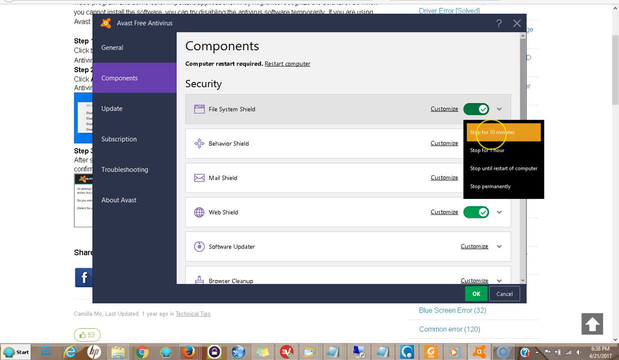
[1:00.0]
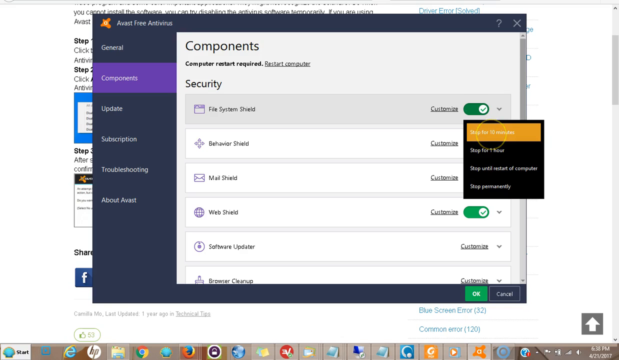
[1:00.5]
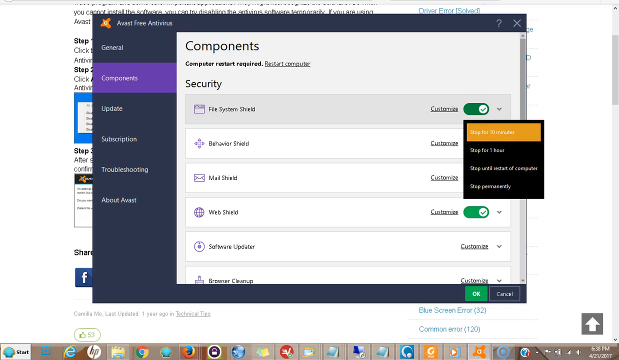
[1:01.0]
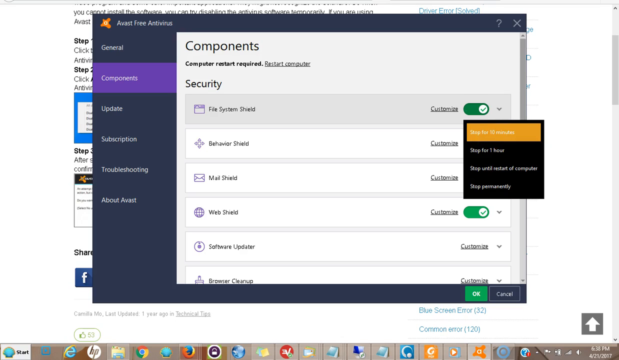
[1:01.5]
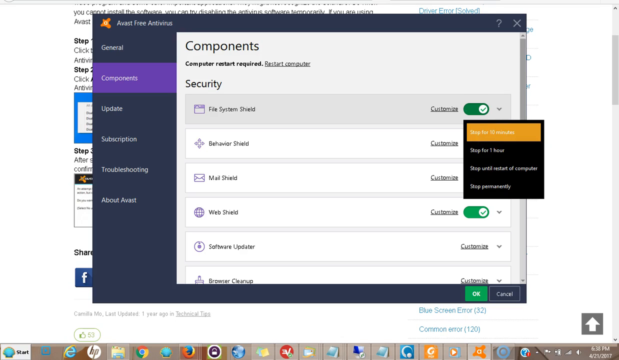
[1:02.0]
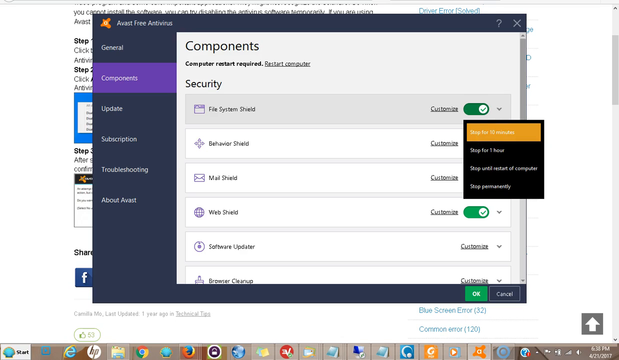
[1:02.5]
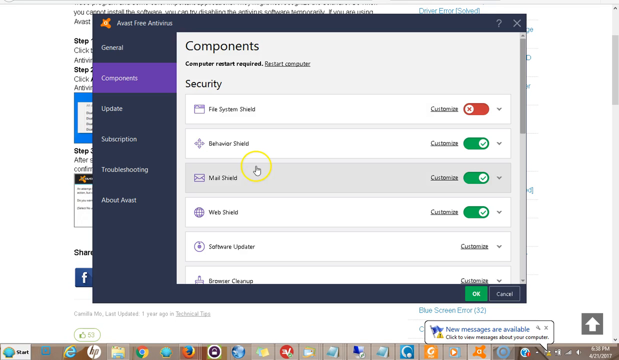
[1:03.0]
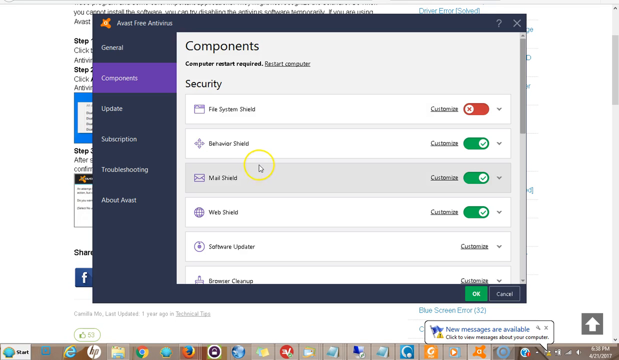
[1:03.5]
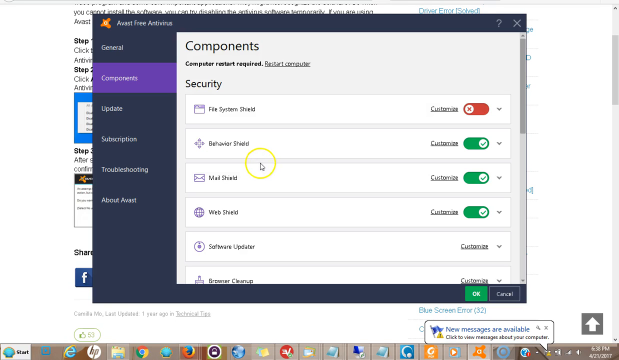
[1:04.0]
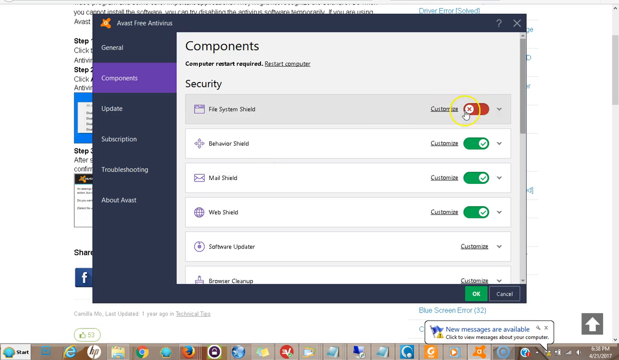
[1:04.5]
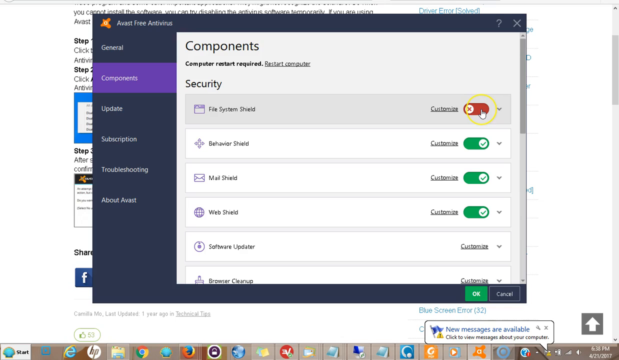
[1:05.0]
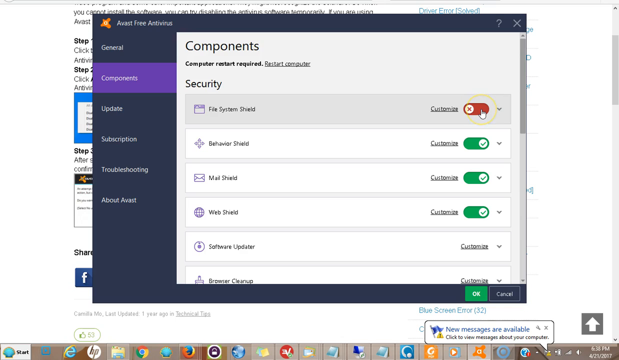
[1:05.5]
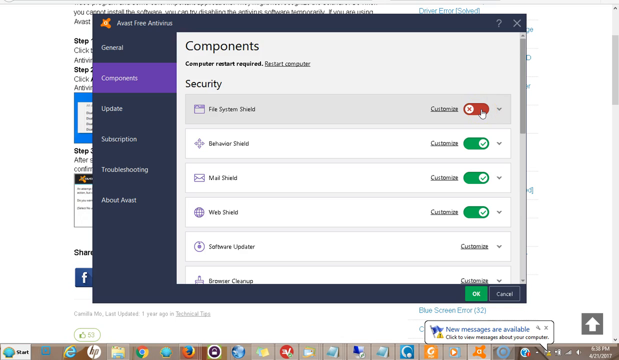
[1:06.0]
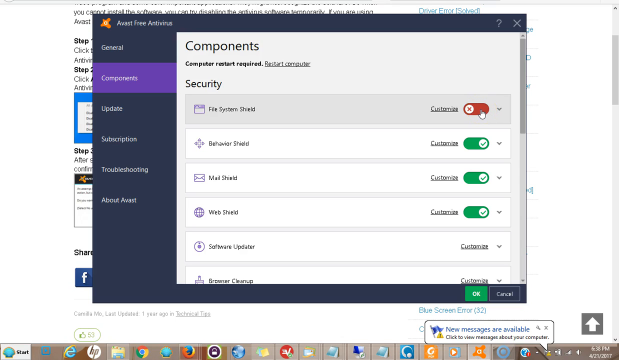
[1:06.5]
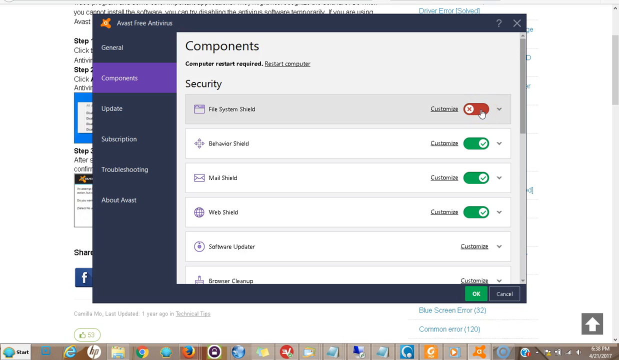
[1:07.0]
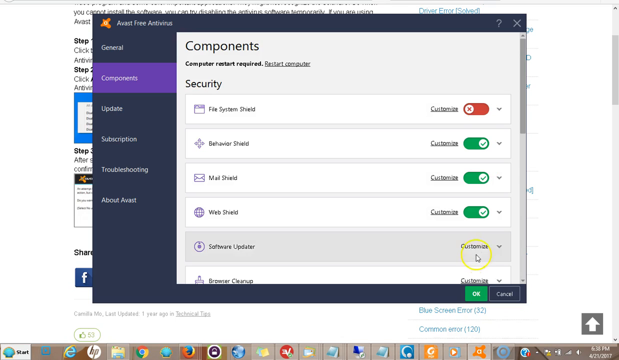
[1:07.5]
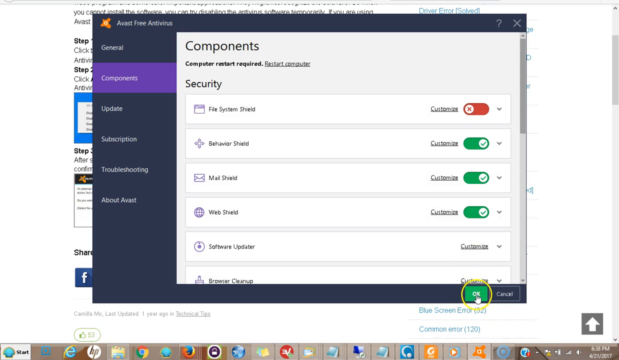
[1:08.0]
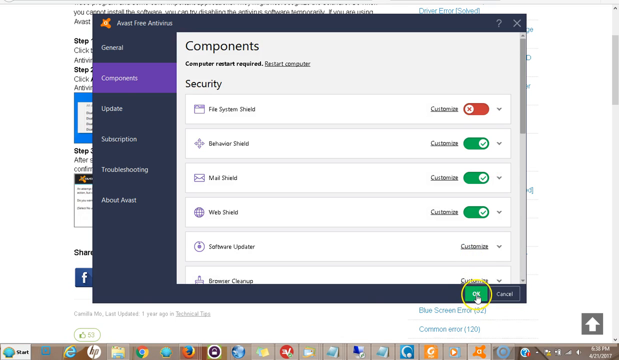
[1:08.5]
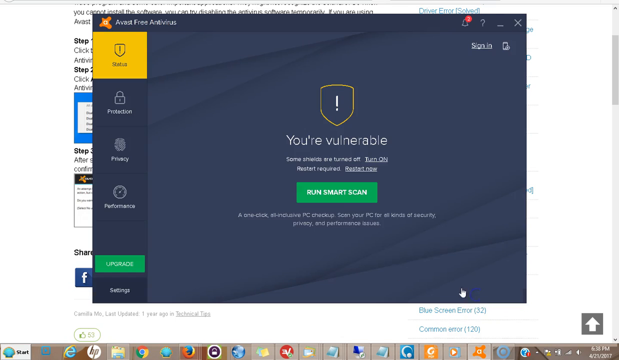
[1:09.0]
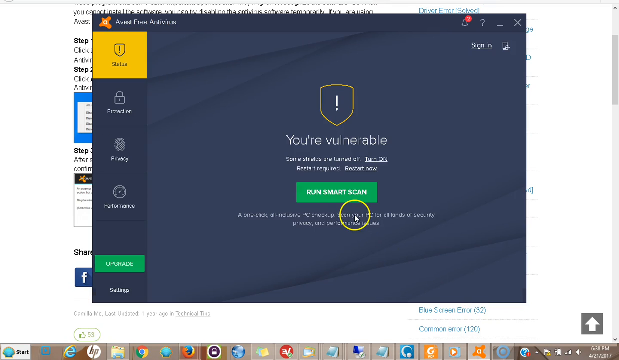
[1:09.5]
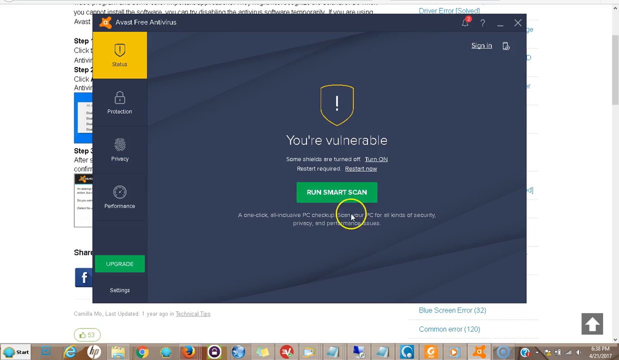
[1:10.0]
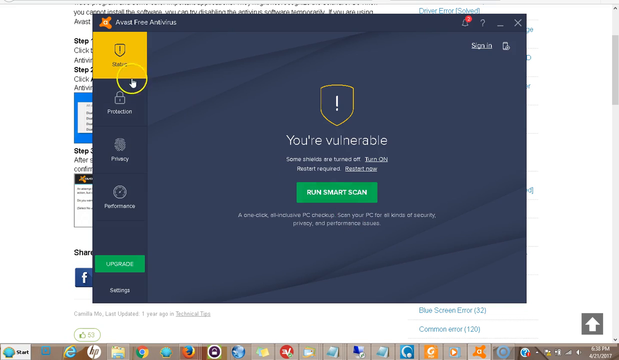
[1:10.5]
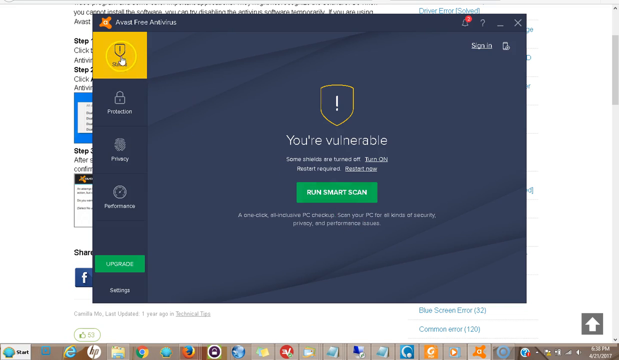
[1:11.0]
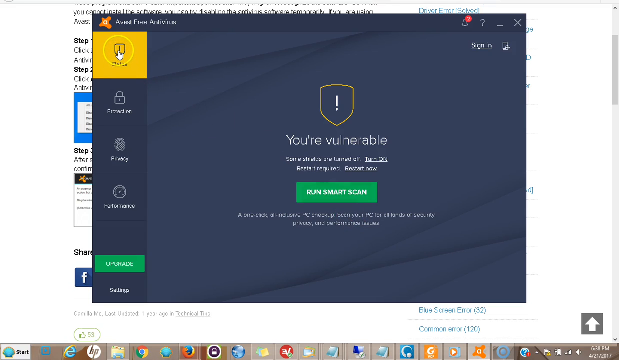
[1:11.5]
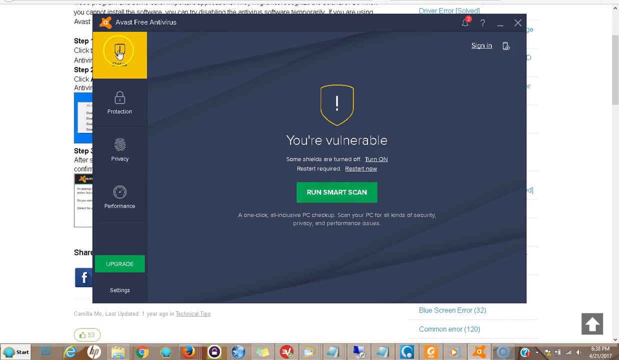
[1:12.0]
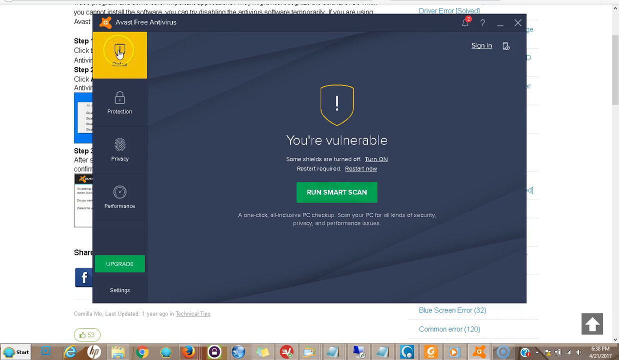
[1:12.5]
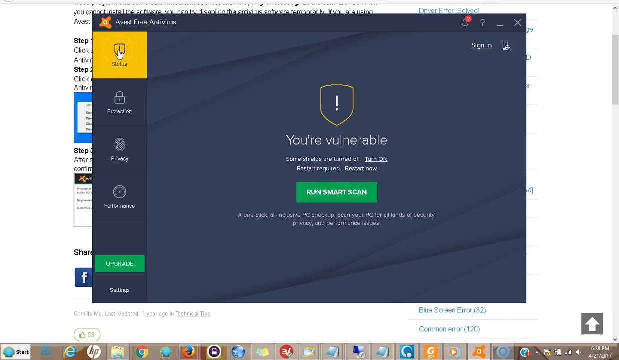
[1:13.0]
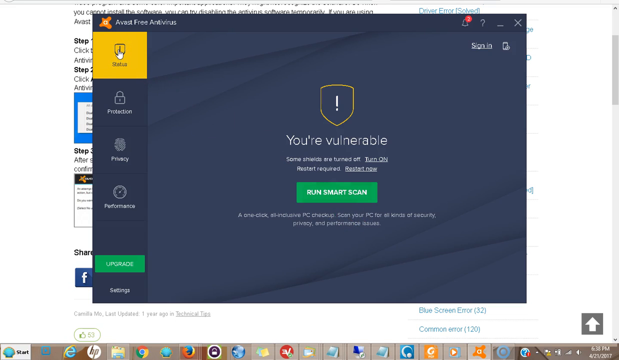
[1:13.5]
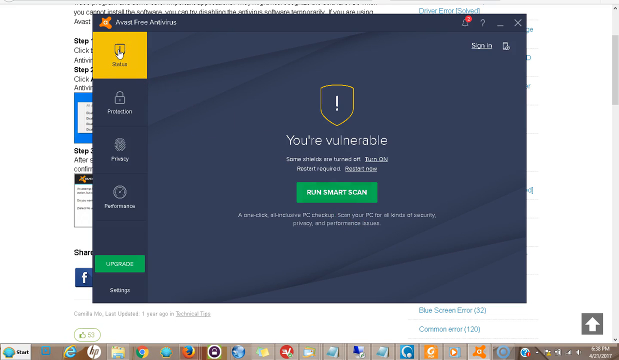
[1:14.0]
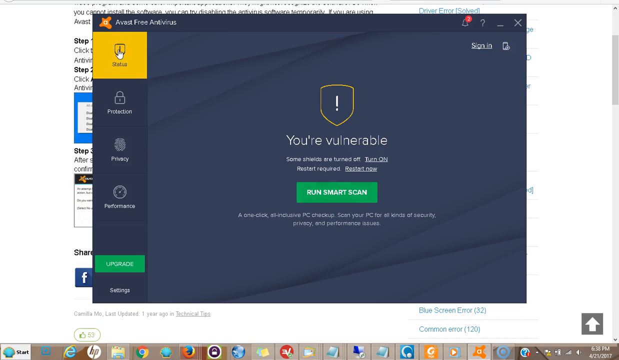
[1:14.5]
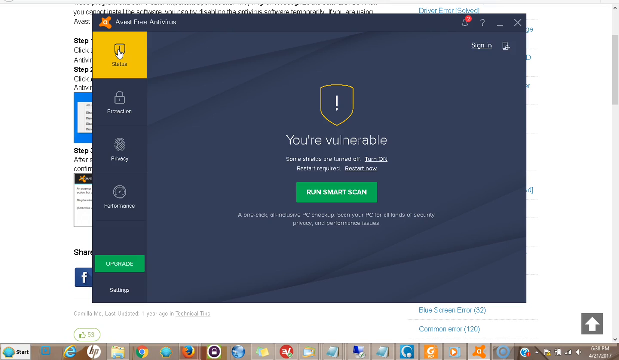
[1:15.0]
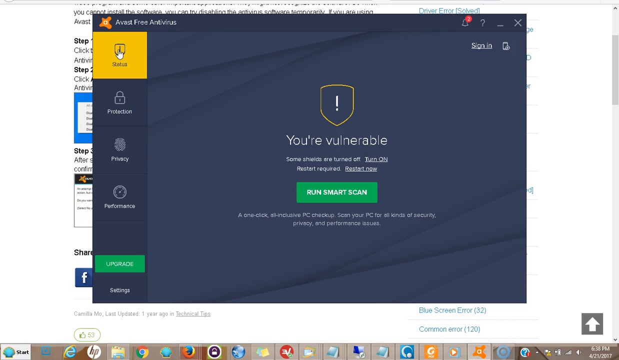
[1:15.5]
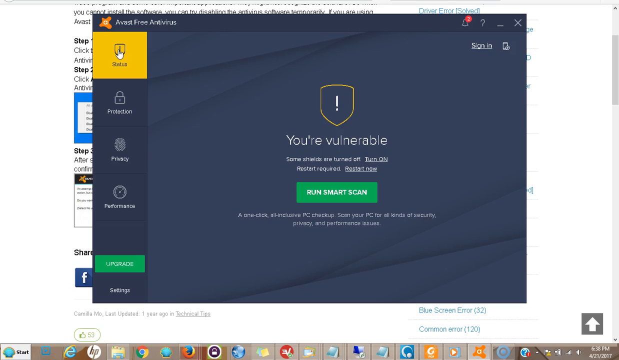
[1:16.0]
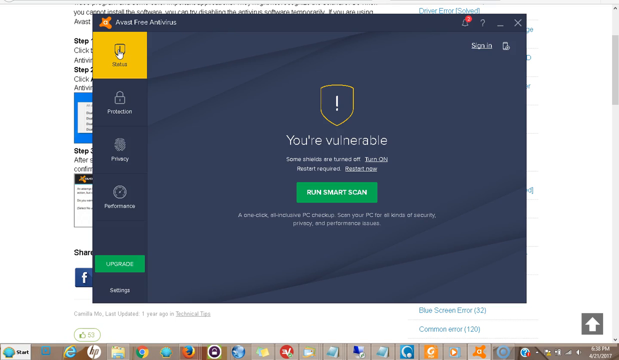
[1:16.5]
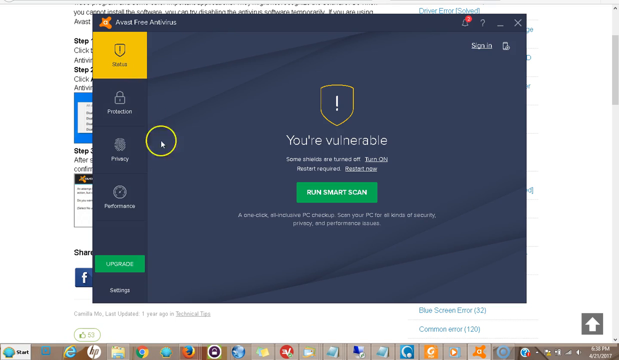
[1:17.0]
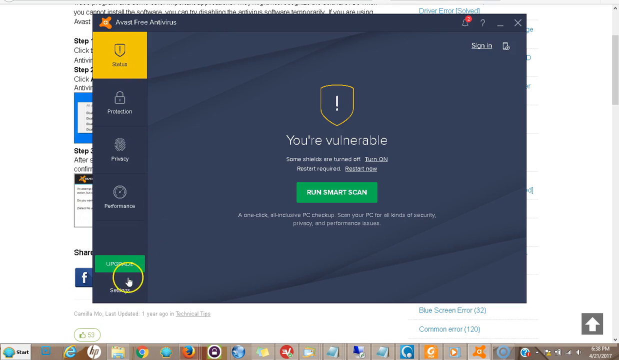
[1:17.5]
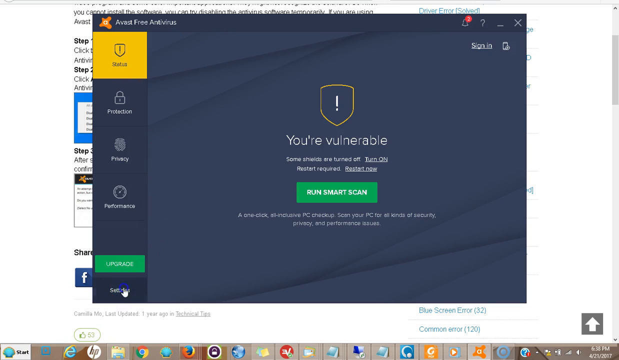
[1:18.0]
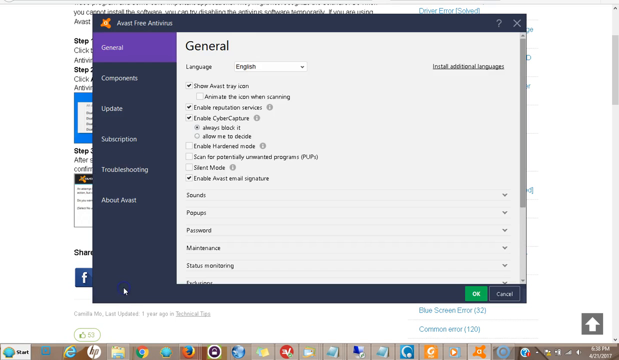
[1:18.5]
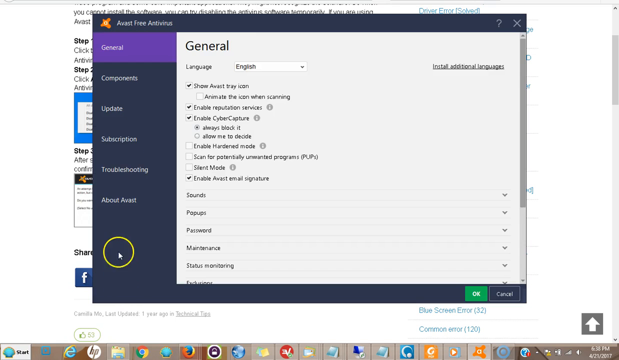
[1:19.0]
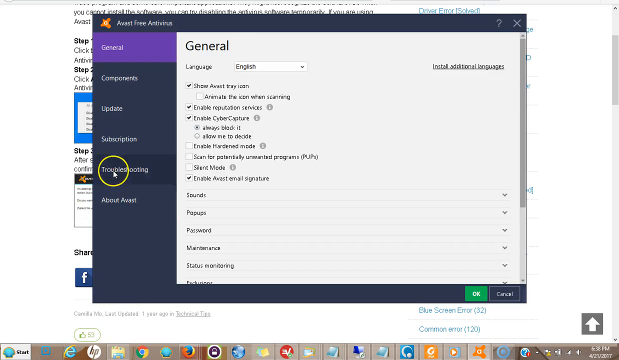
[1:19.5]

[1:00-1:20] After the 10-minute option is clicked, the check mark showing the file system shield was active is turned off: the circle has moved to the left side and shows an X. The user hovers the mouse over it, then moves down and clicks OK. The status icon, previously a checkmark, now shows a yellow shield with an exclamation mark. In the center, a matching shield appears with the text "you're vulnerable. Some shields are turned off," and a turn on button to the right of it. The user goes back and clicks on settings.